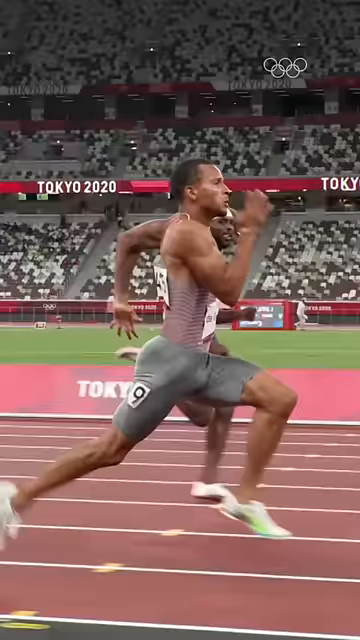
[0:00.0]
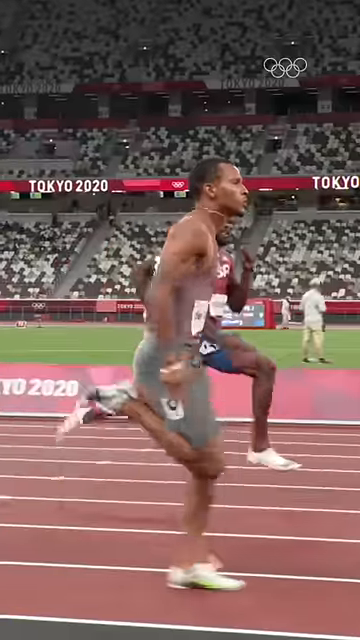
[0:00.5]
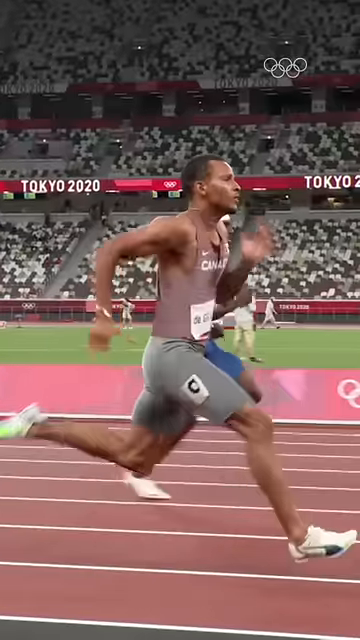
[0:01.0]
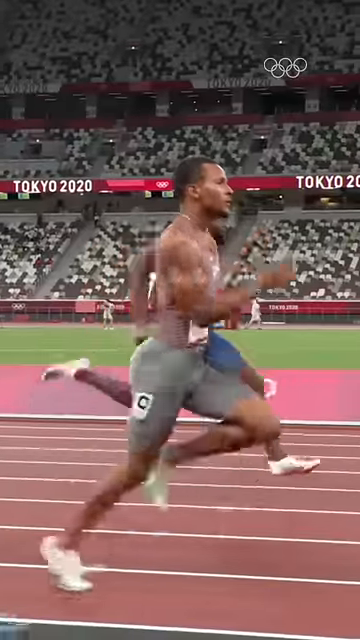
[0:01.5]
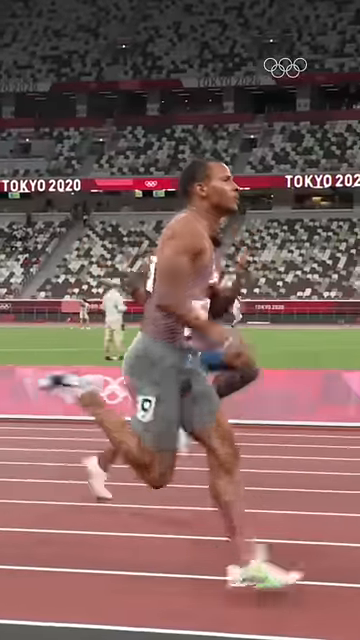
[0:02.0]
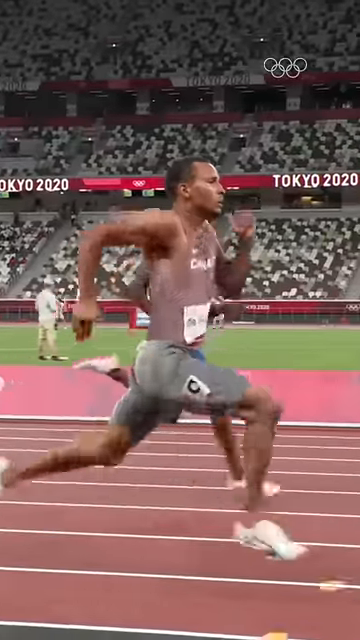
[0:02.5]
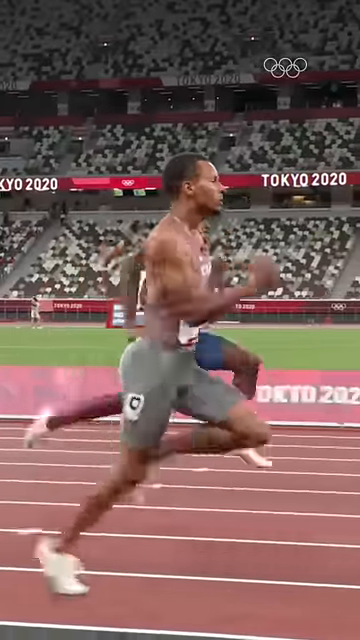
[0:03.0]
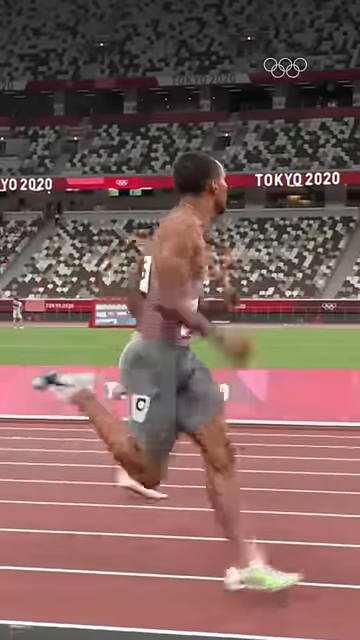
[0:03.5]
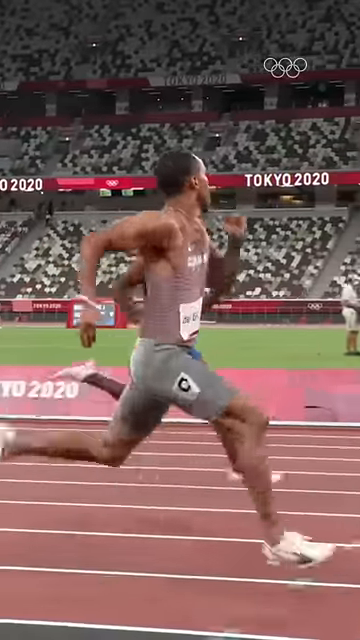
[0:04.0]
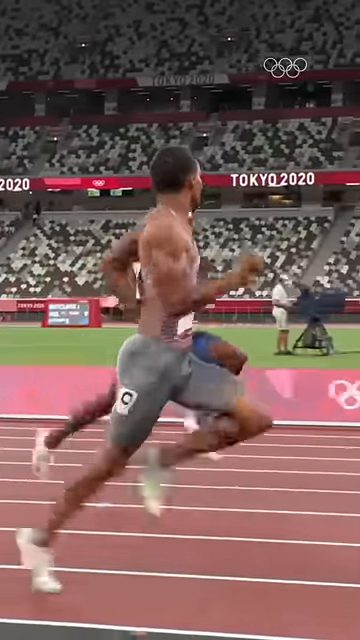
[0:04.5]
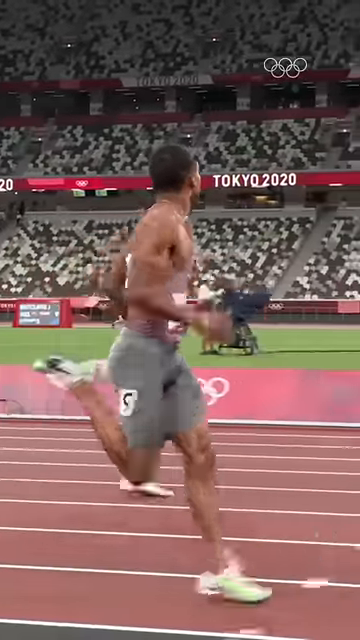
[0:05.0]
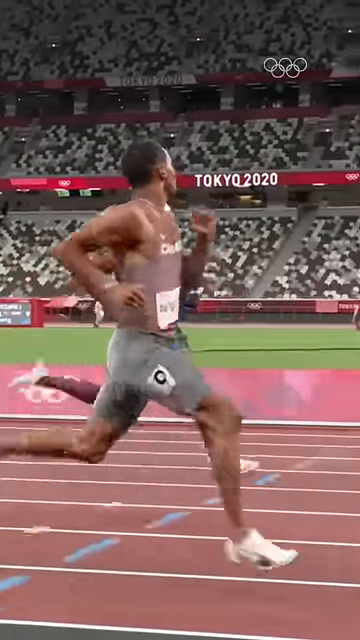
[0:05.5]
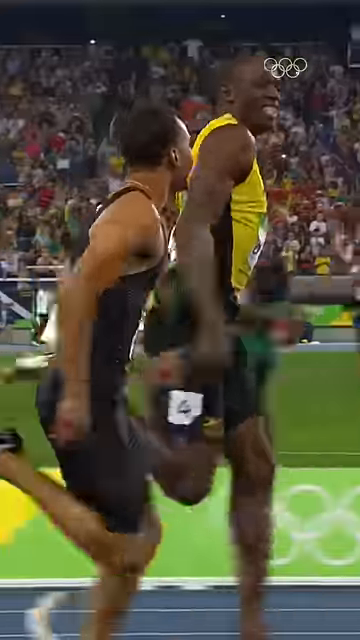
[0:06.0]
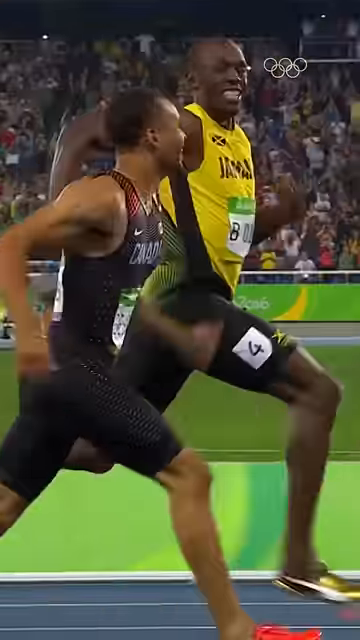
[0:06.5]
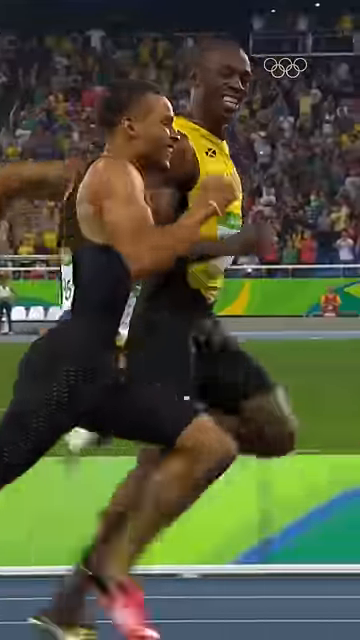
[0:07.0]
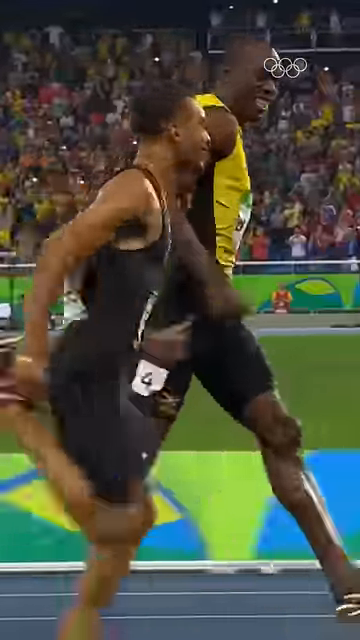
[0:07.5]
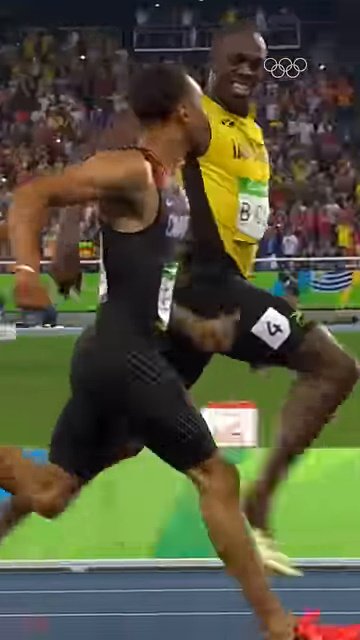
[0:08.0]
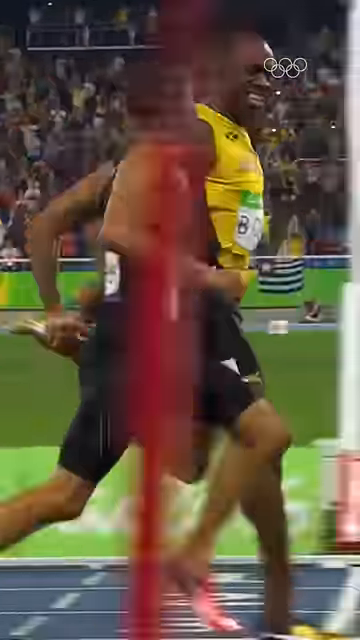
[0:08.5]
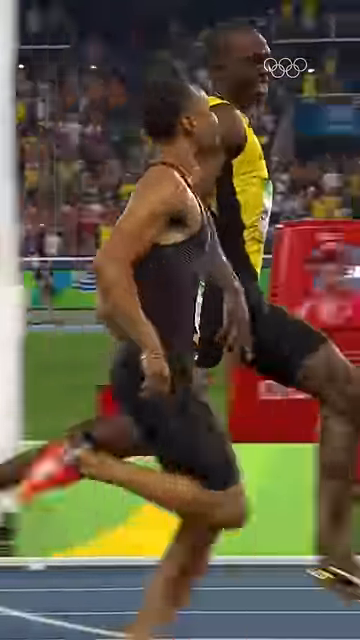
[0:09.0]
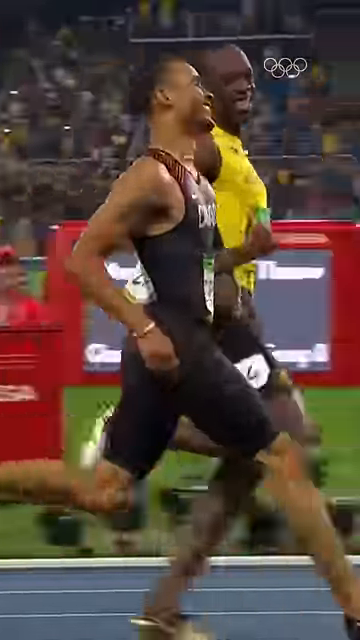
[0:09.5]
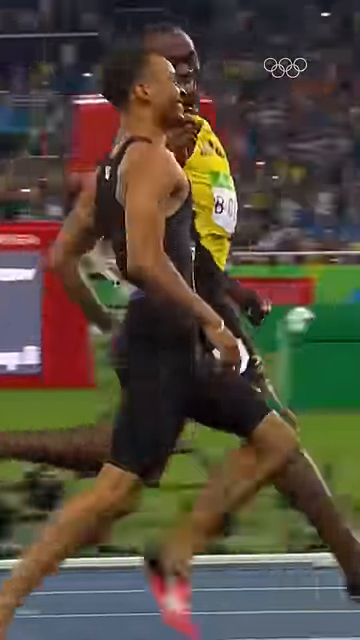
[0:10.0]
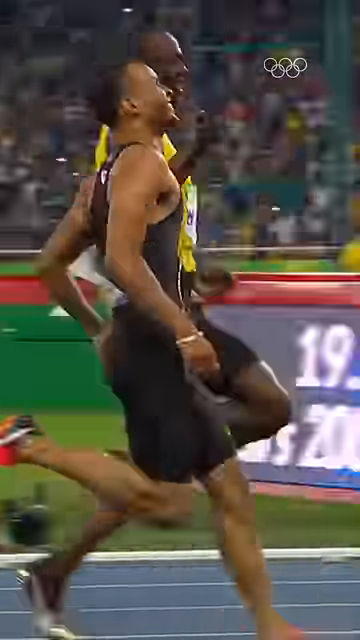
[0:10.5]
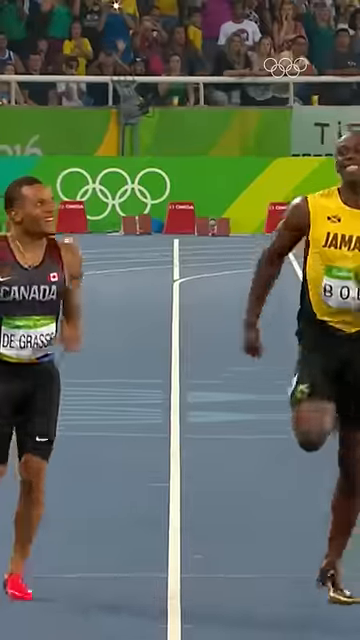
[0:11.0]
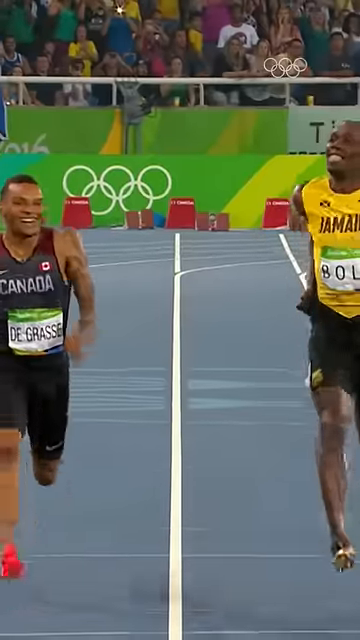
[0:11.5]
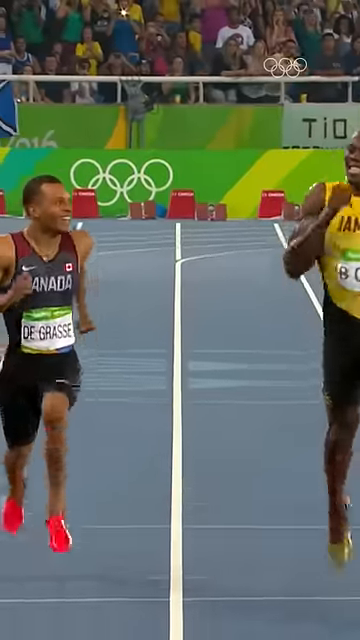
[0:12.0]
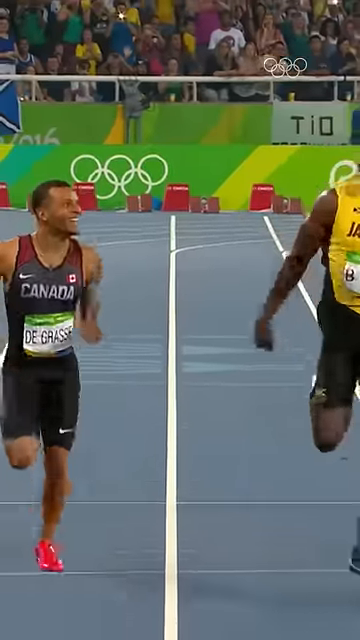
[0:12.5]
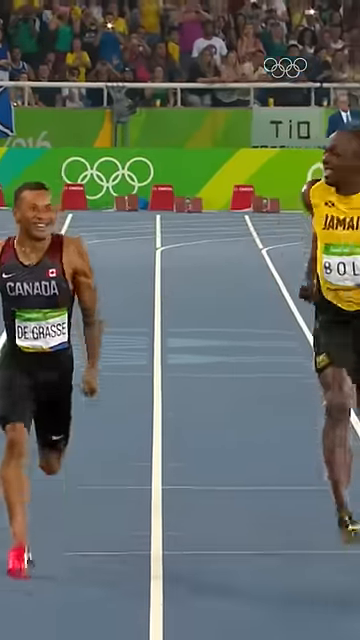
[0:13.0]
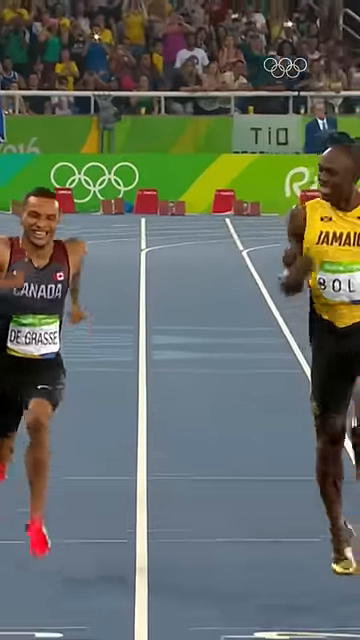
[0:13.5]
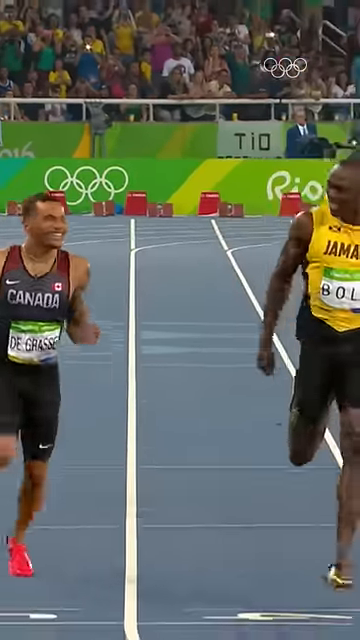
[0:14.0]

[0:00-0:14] A closeup shows two sprinters sprinting in a stadium, with the crowd visible in the background. One sprinter wears a track uniform with gray bottoms and a grayish red top. He looks over to the left at his opponent as they both run; the opponent is barely visible on the far side of the camera angle, with only their legs in view and not their face or upper torso. The red track is visible. In the next shot, the same sprinter in gray bottoms runs against the track and field athlete Usain Bolt, who wears a yellow top and black shorts. The two look at each other as they sprint, laughing and smiling as they run down the track. This race appears to be in a different stadium, where the track is blue with white lines. In both shots the crowd is visible behind the two sprinters, and no other sprinters besides these two are seen running down the track.